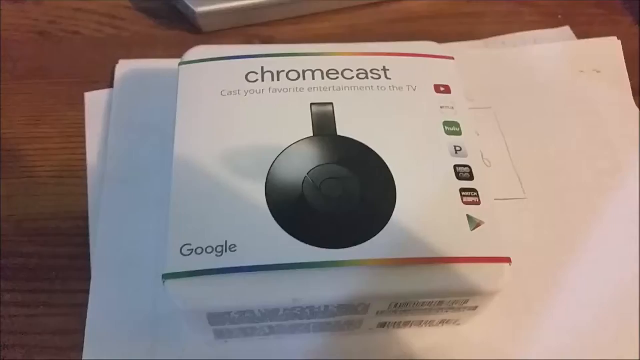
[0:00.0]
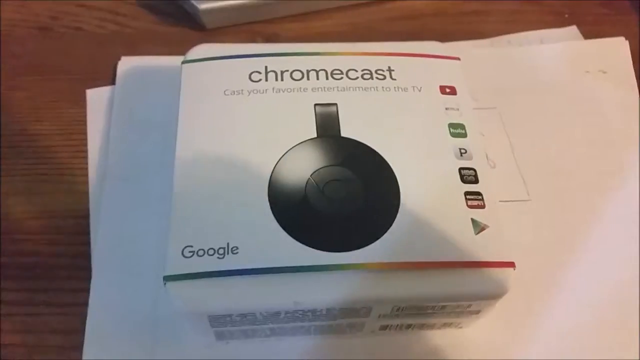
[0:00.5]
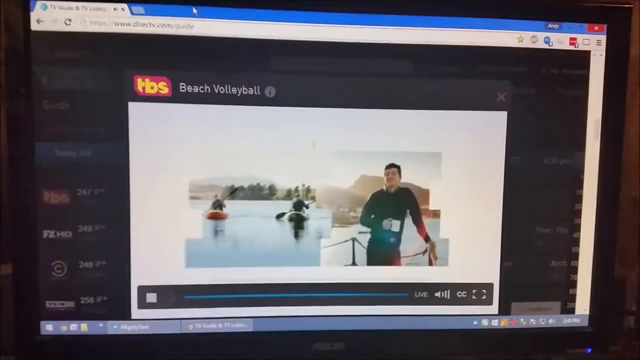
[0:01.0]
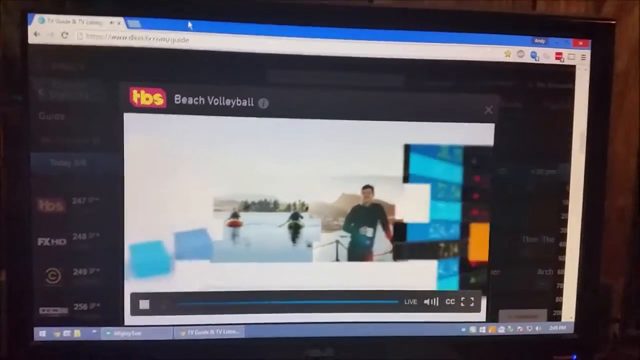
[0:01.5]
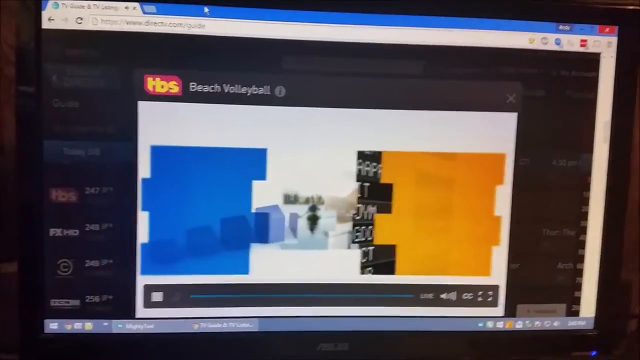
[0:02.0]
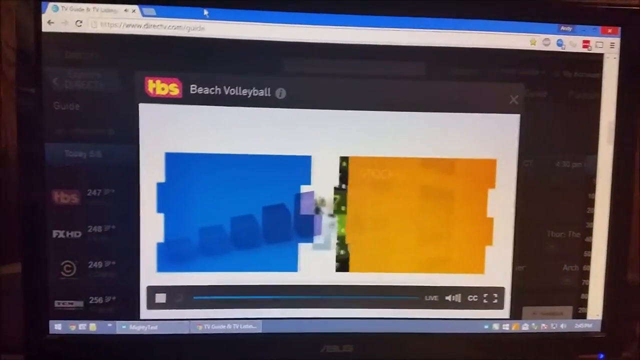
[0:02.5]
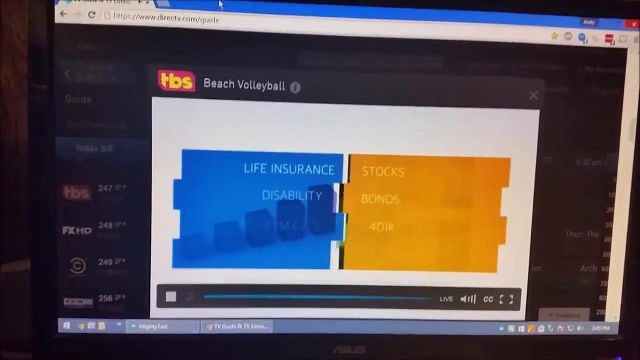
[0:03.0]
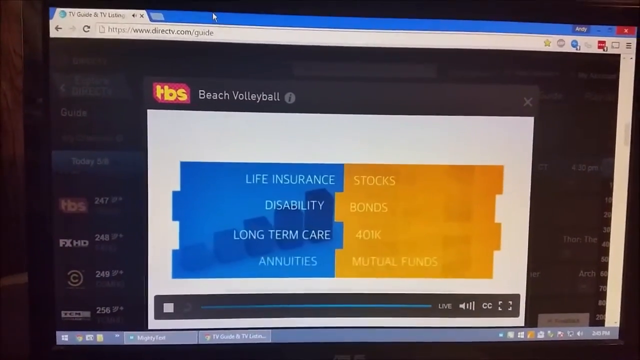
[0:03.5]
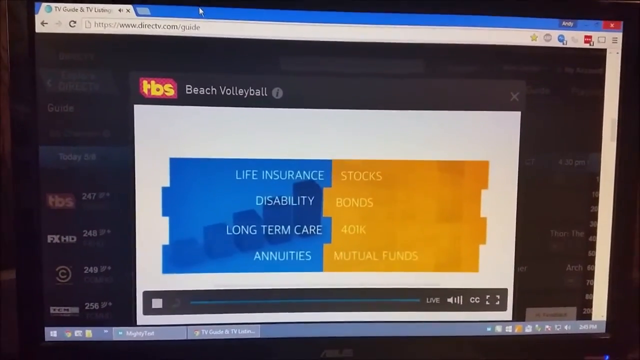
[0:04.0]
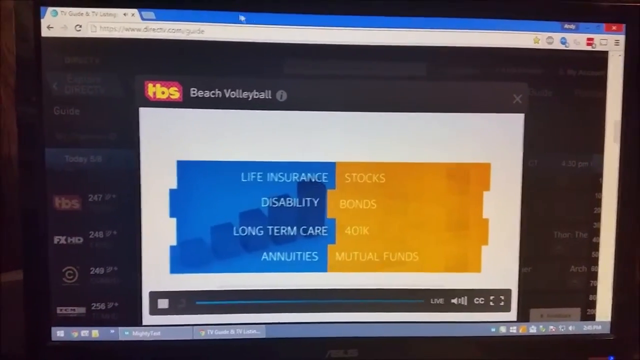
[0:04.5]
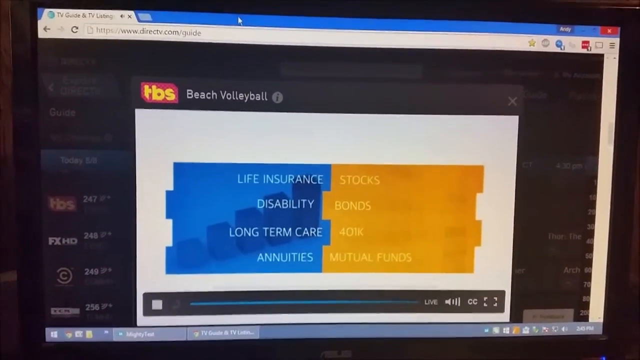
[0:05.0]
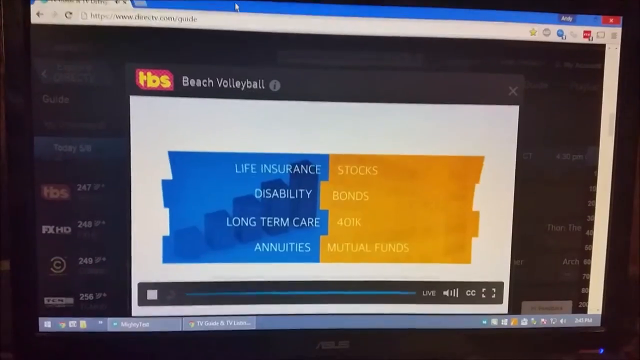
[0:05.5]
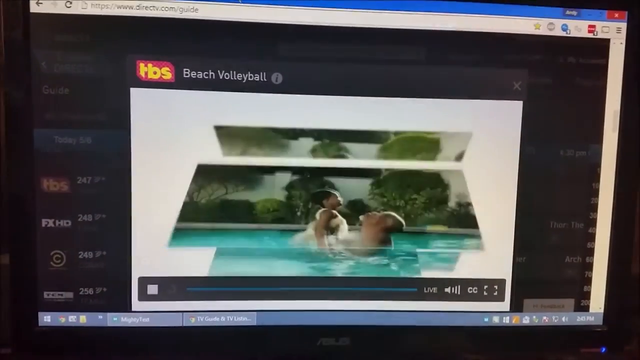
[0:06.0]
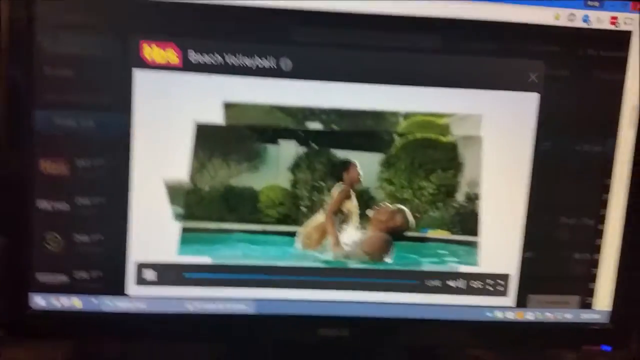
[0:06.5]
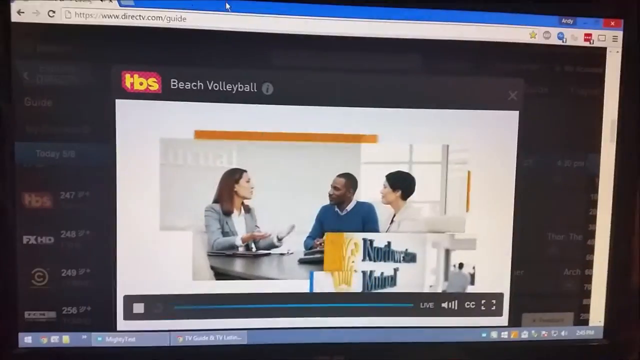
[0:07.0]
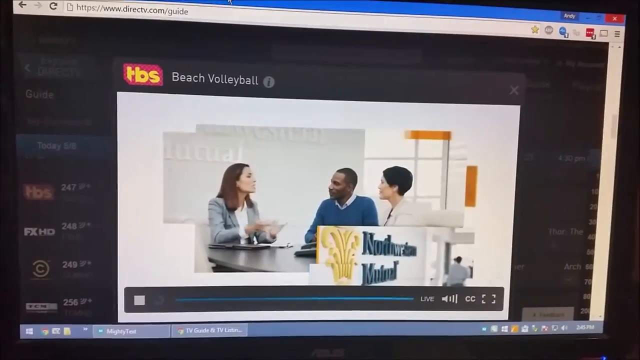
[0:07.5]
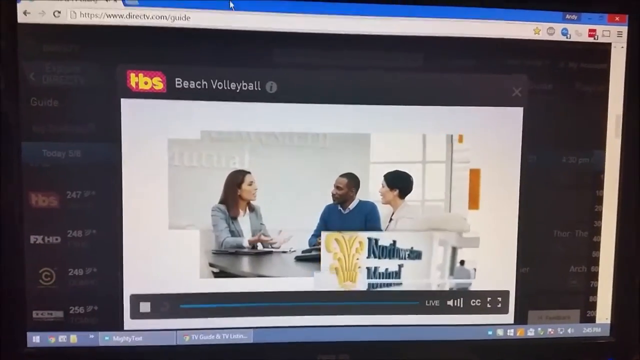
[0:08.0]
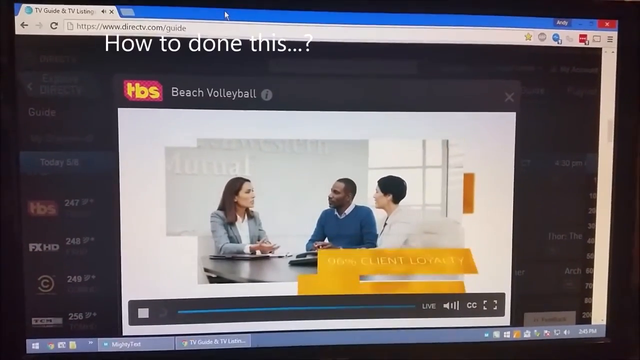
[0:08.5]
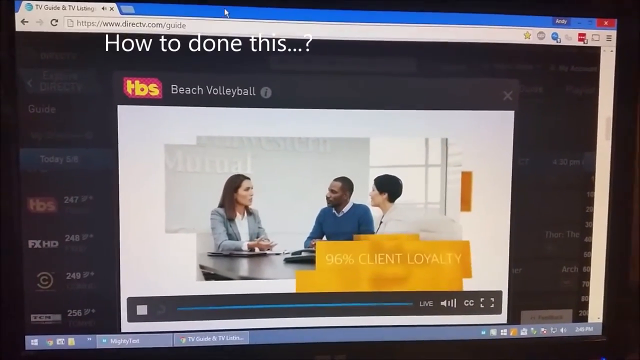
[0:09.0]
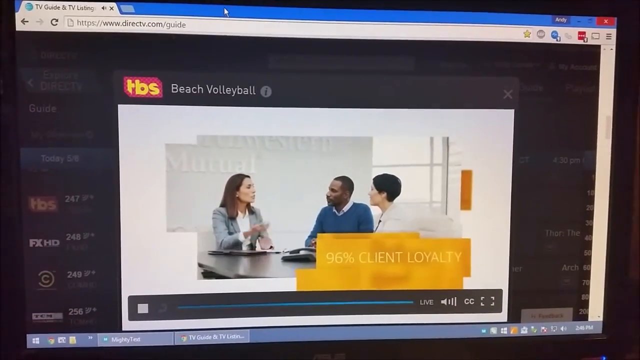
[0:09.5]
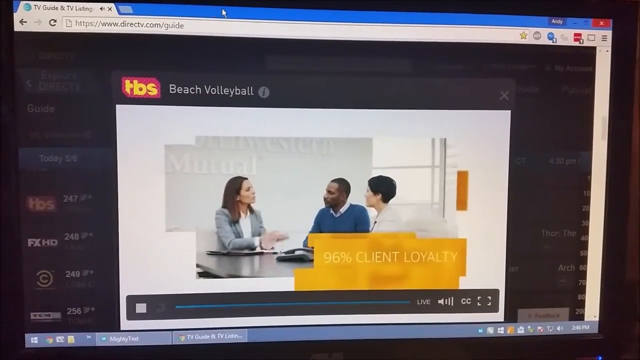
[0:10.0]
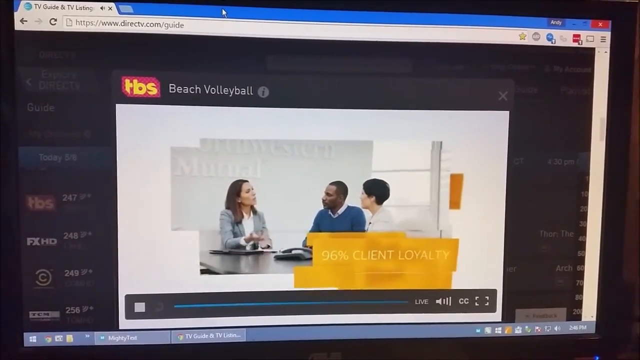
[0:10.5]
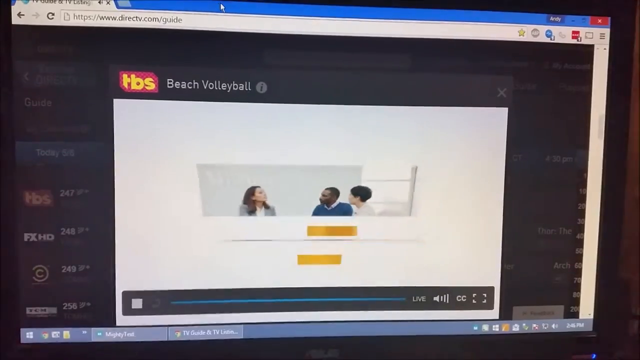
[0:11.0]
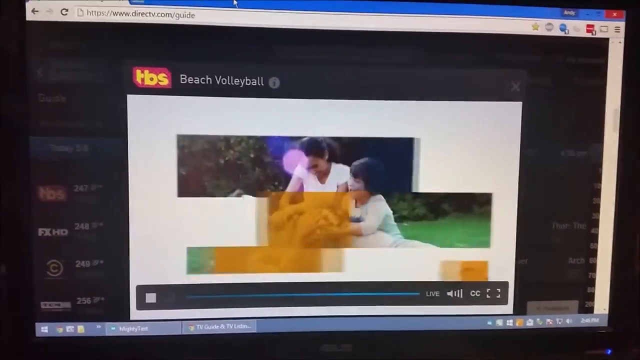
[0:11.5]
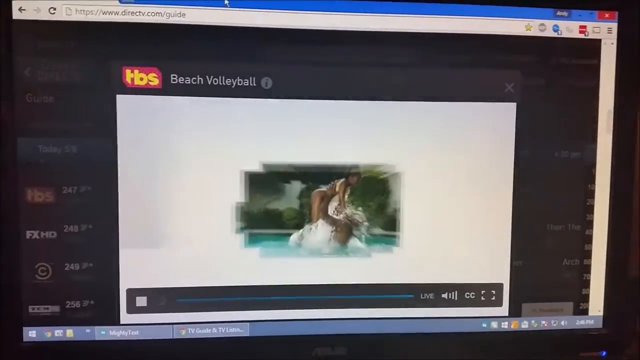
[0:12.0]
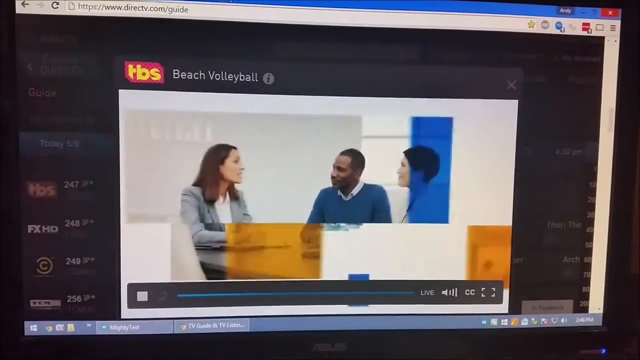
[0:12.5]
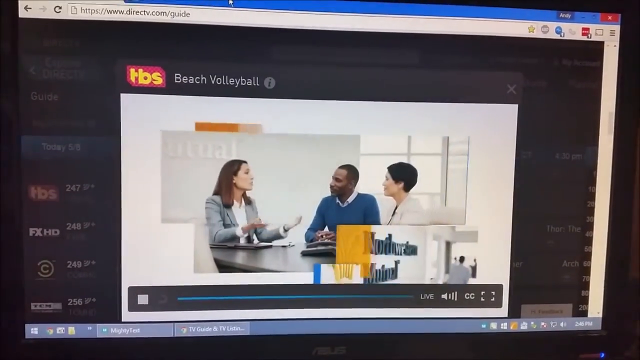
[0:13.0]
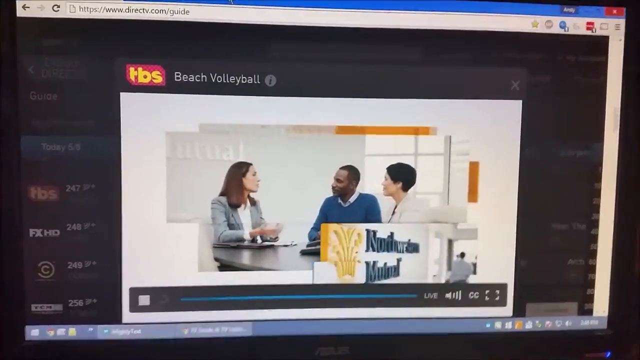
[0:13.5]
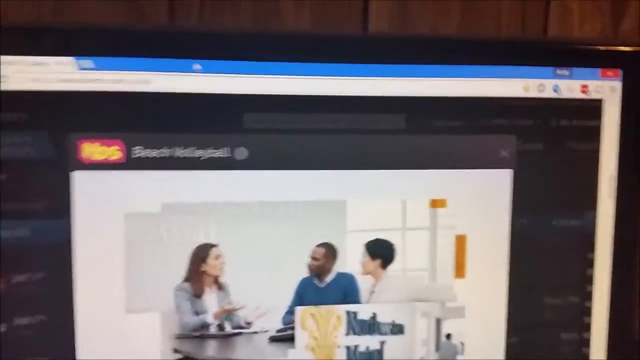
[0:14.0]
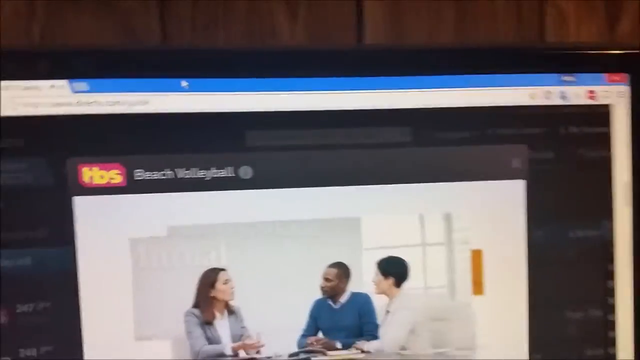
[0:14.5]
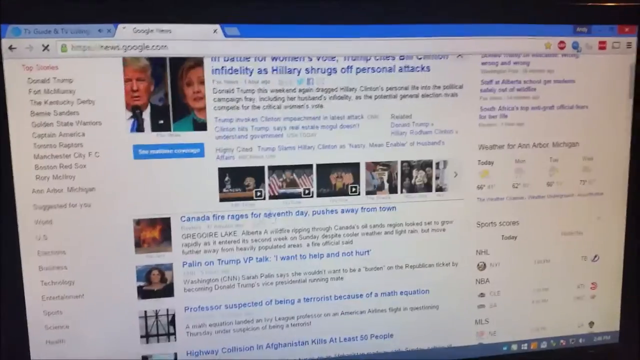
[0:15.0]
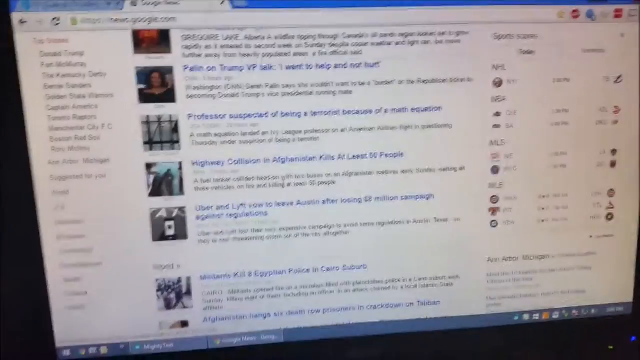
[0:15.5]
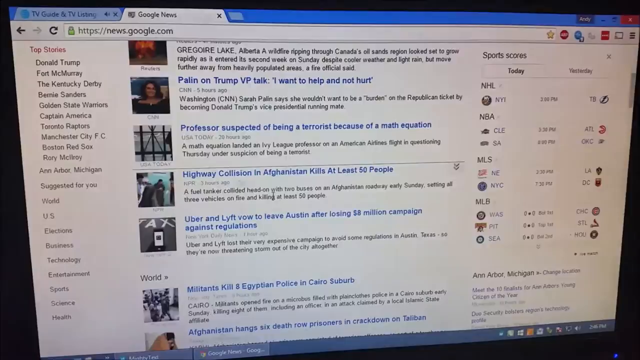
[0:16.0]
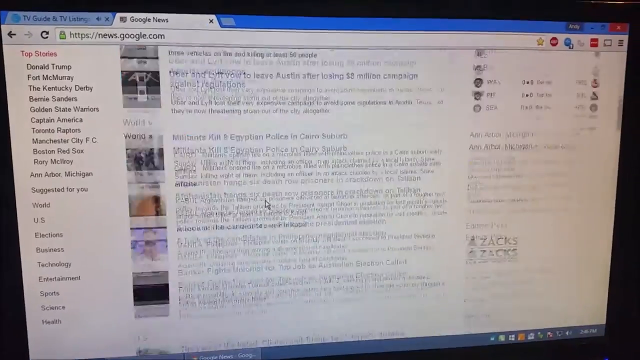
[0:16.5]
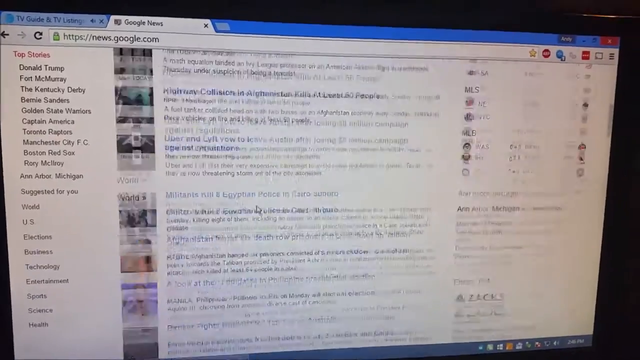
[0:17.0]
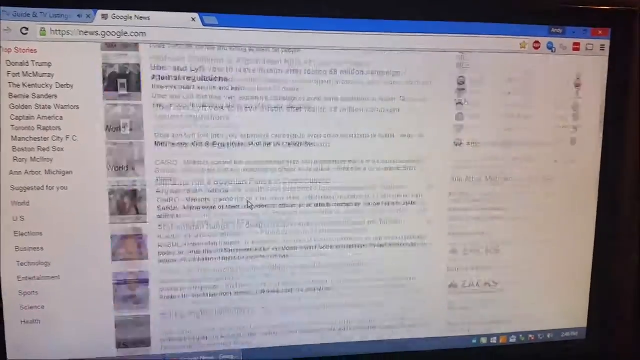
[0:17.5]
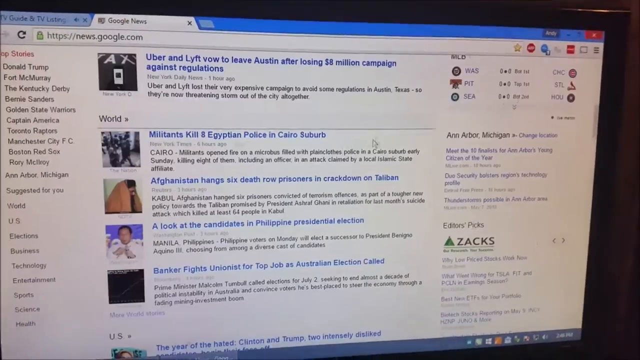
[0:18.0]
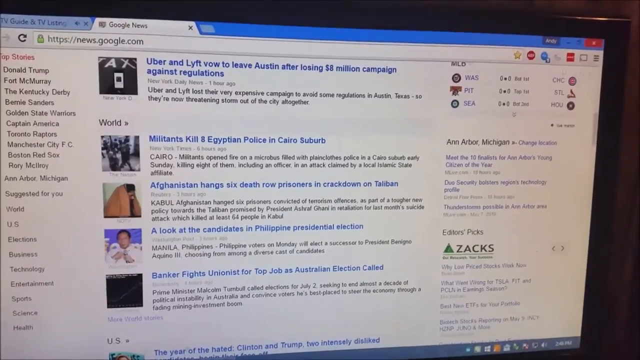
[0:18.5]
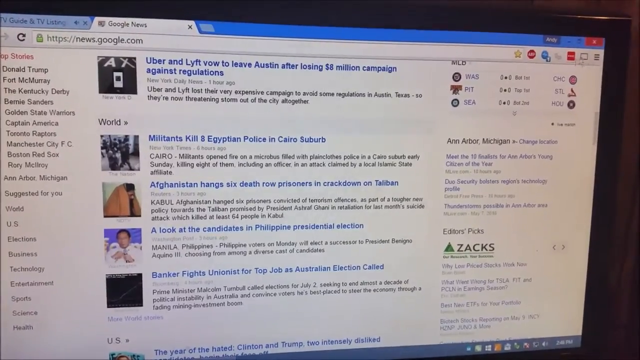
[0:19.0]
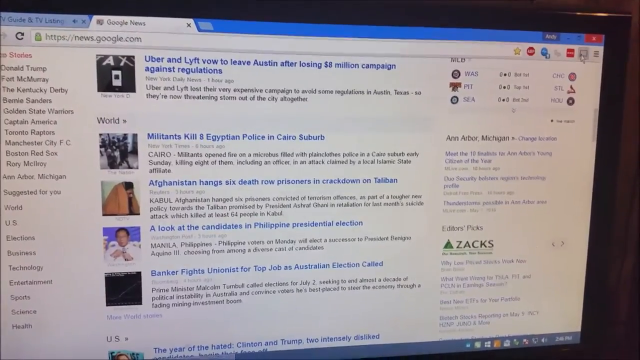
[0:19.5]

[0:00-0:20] An ad shows many different people of diverse racial backgrounds talking to each other in a business meeting. A product called Chromecast by Google is shown at the very beginning of the scene. The video then goes to the news section of google.com, which shows a number of different news articles.